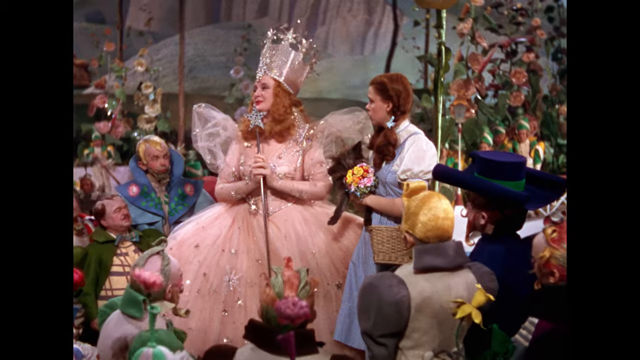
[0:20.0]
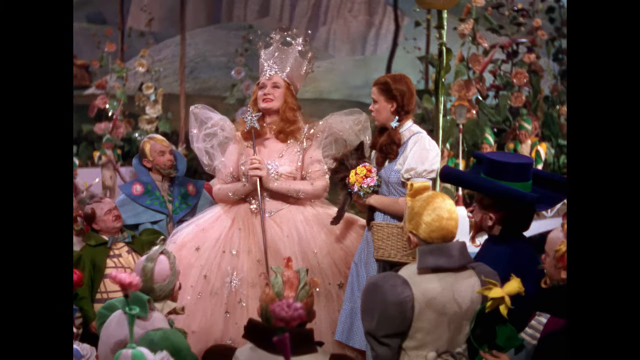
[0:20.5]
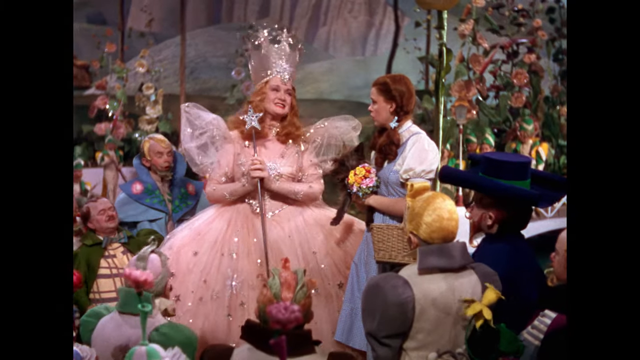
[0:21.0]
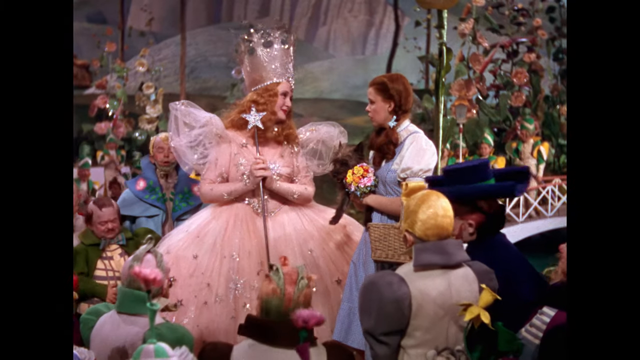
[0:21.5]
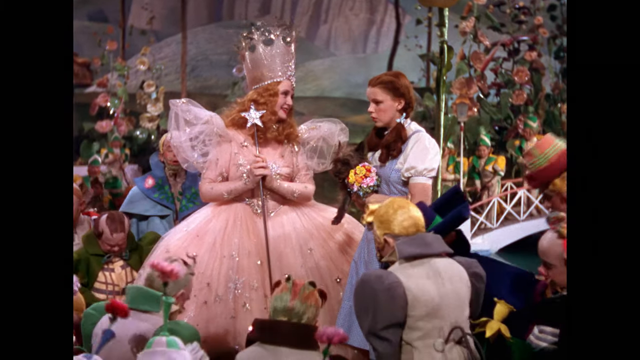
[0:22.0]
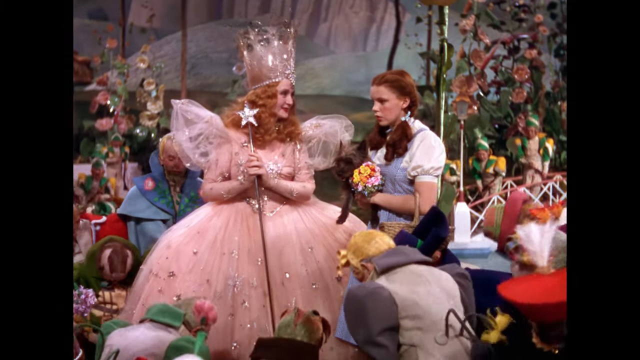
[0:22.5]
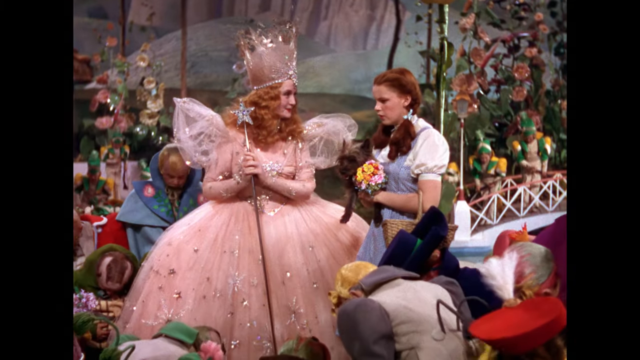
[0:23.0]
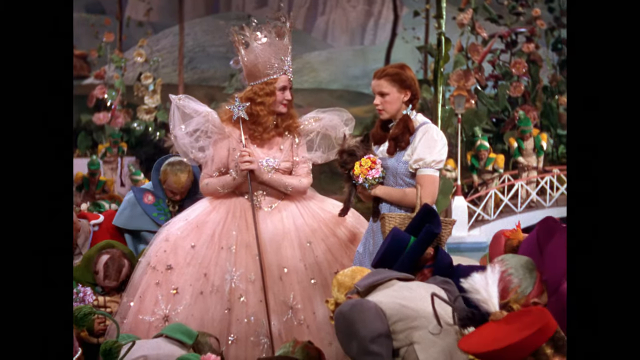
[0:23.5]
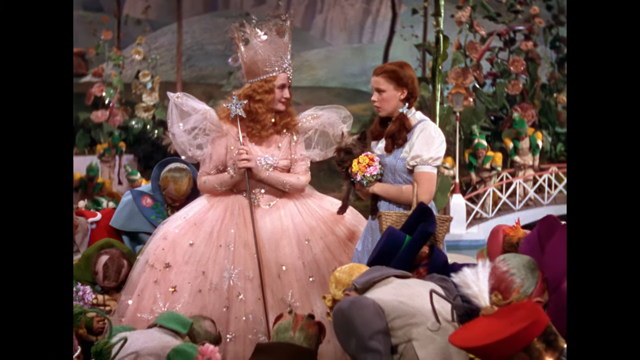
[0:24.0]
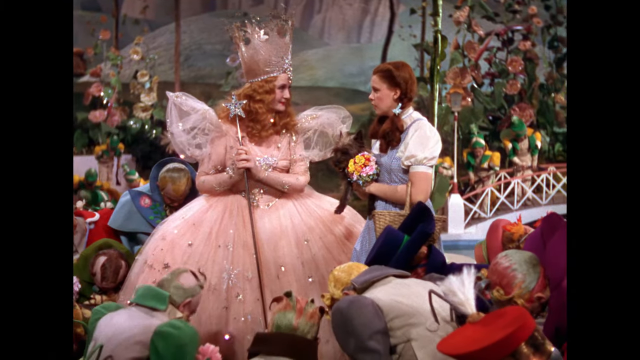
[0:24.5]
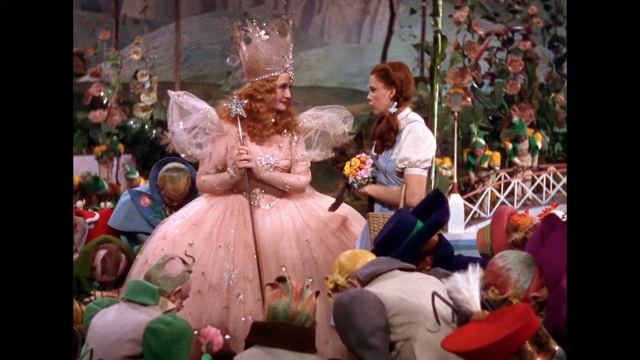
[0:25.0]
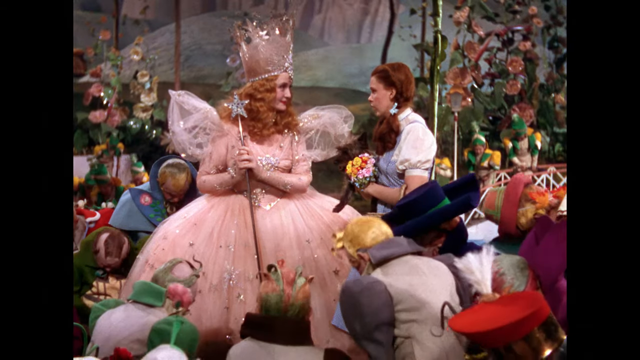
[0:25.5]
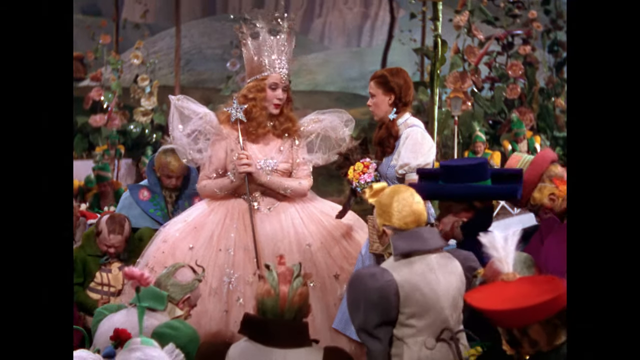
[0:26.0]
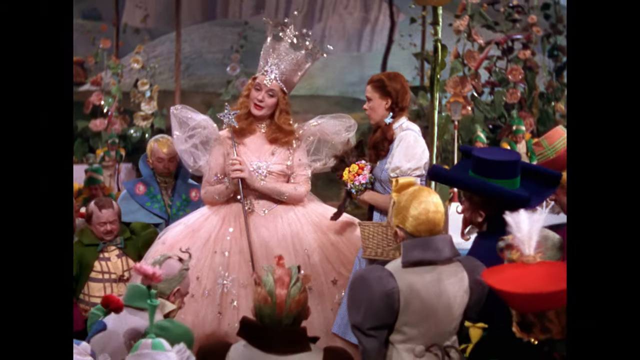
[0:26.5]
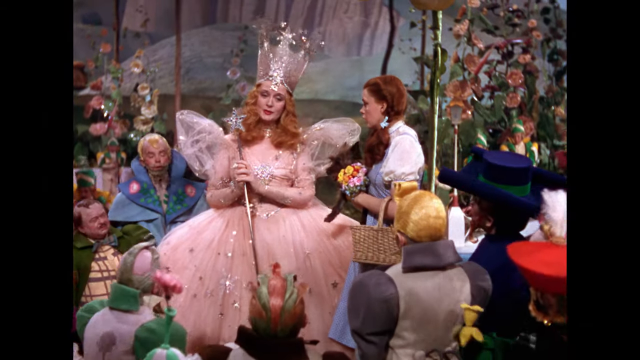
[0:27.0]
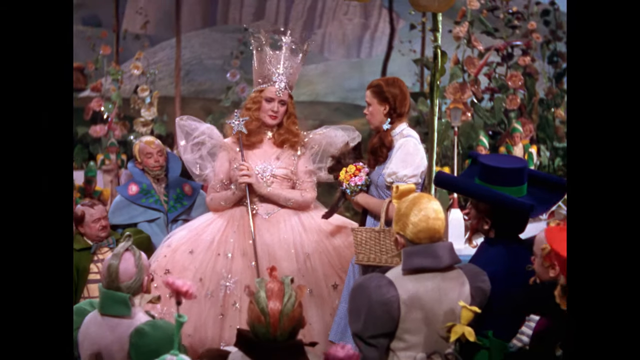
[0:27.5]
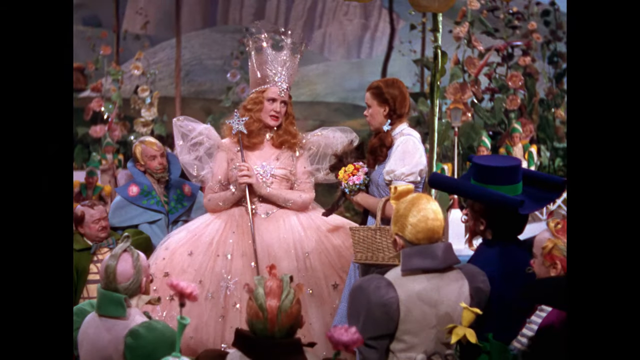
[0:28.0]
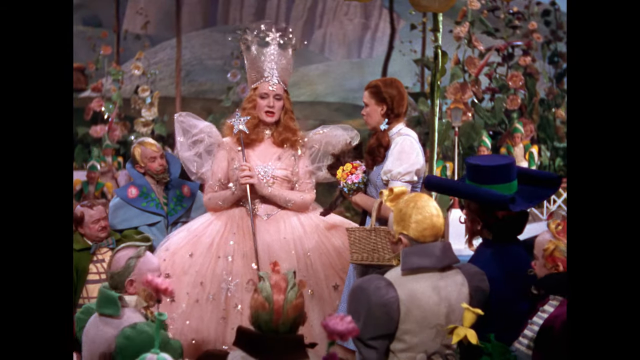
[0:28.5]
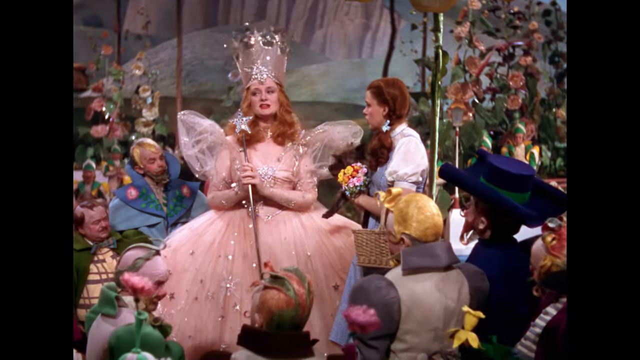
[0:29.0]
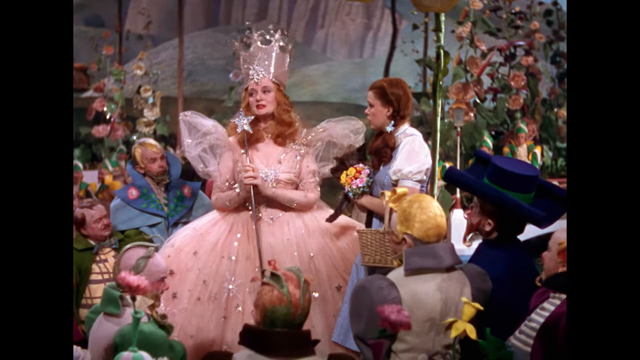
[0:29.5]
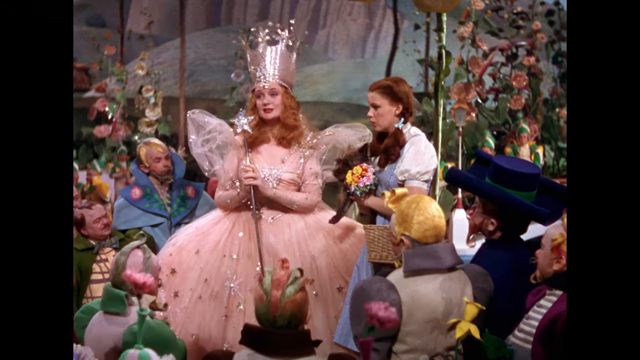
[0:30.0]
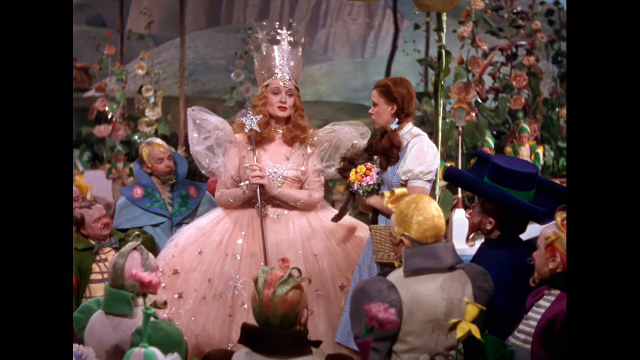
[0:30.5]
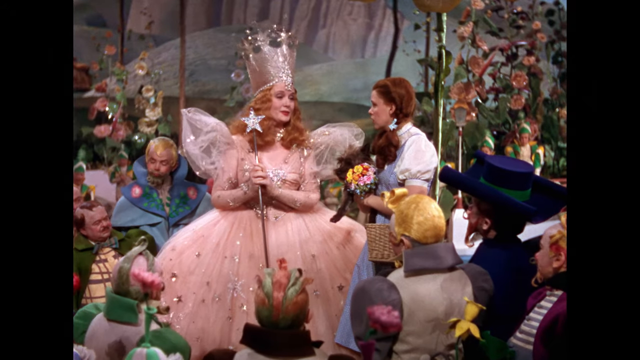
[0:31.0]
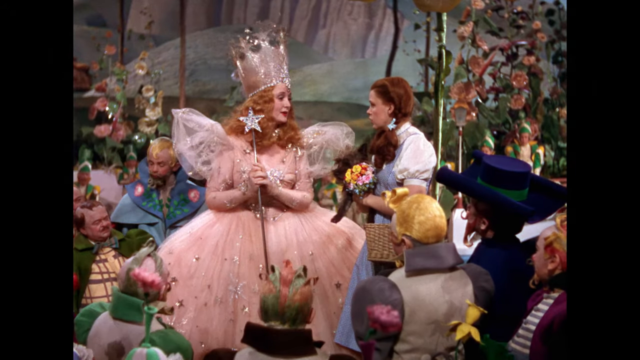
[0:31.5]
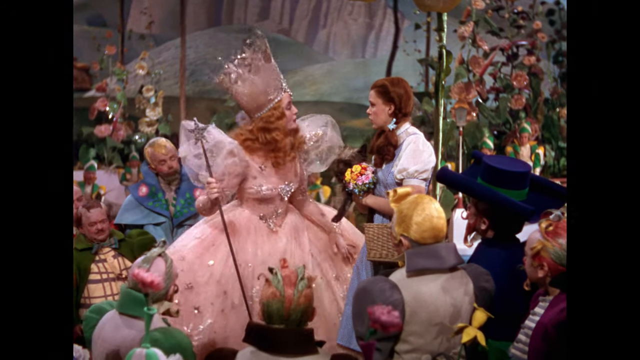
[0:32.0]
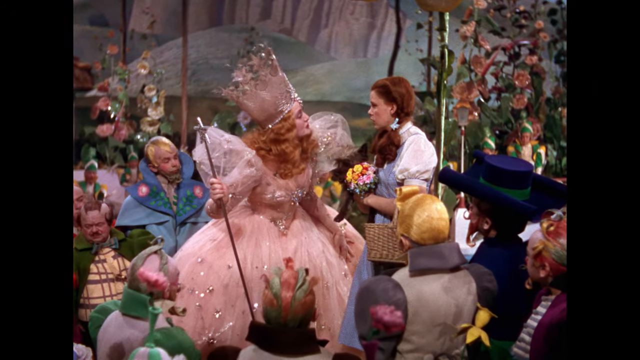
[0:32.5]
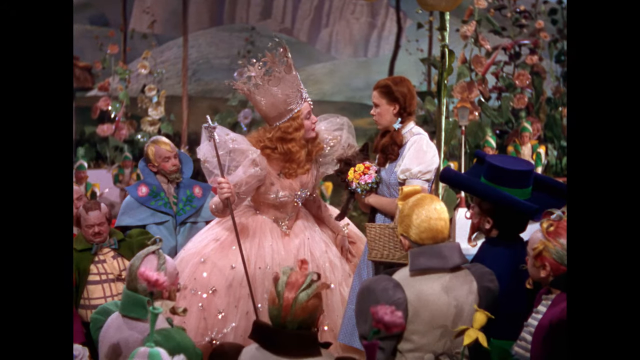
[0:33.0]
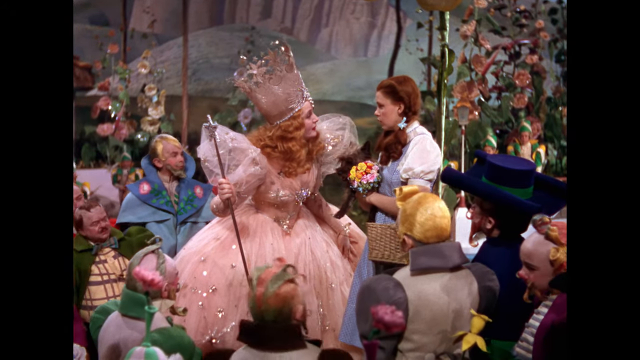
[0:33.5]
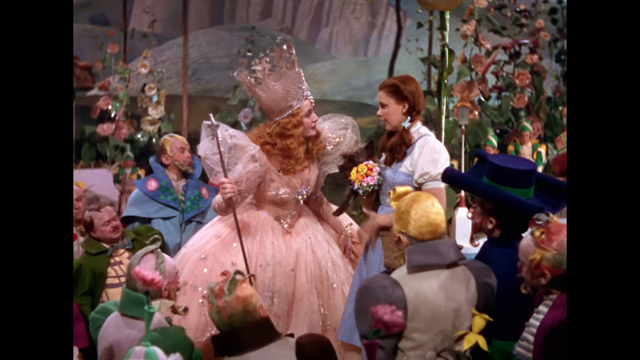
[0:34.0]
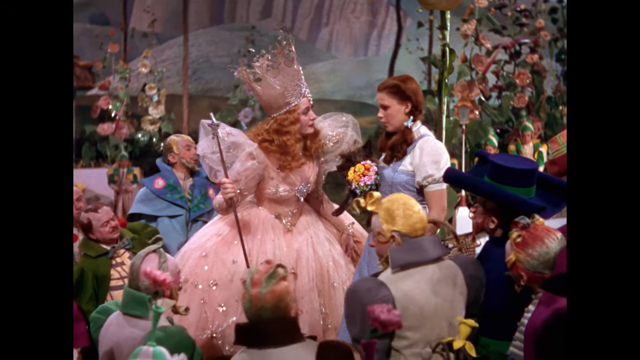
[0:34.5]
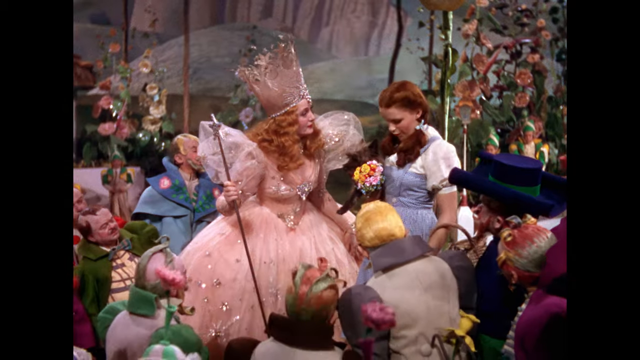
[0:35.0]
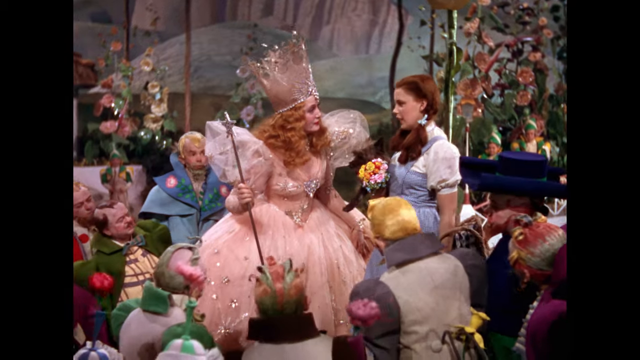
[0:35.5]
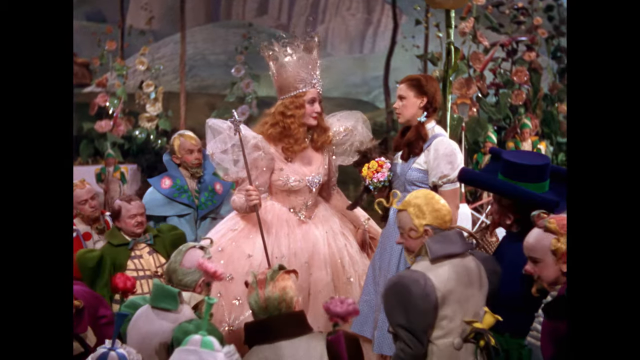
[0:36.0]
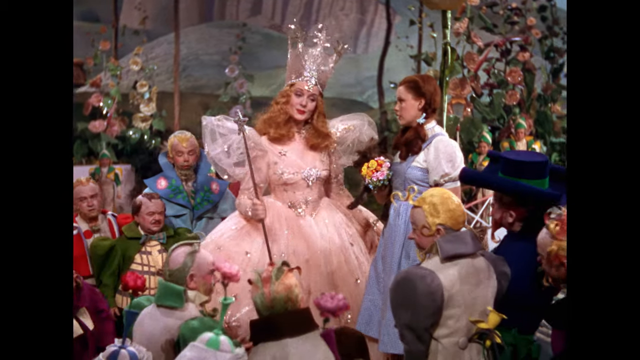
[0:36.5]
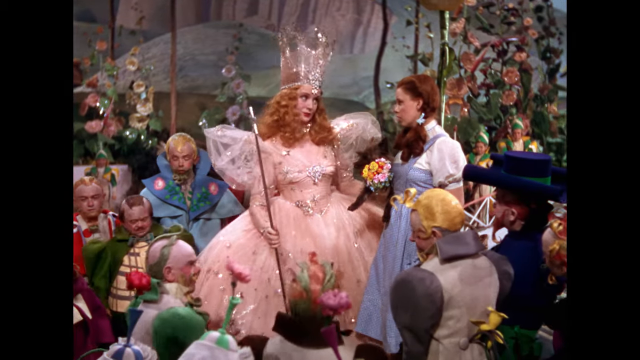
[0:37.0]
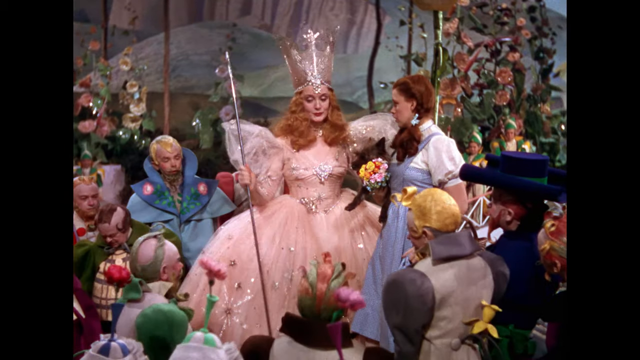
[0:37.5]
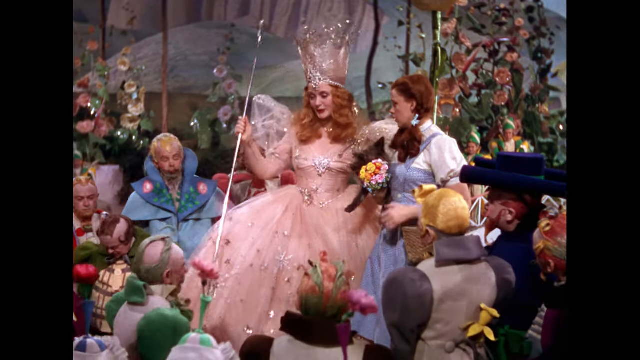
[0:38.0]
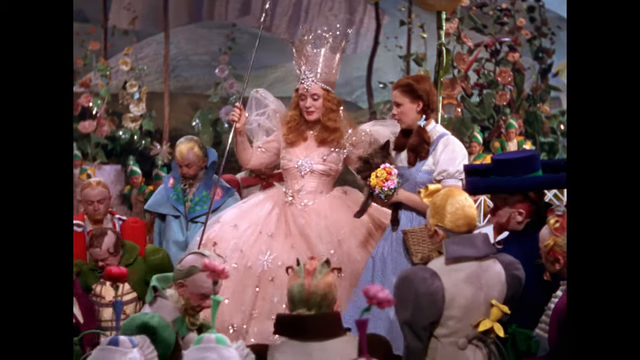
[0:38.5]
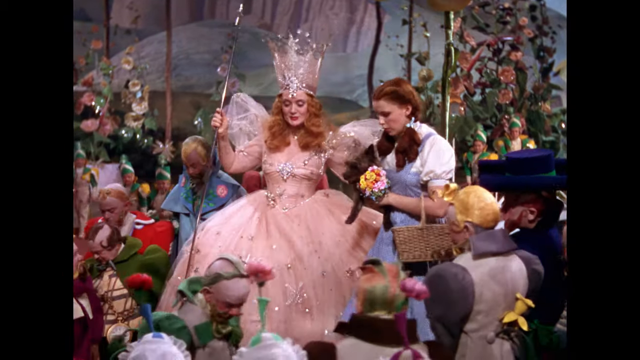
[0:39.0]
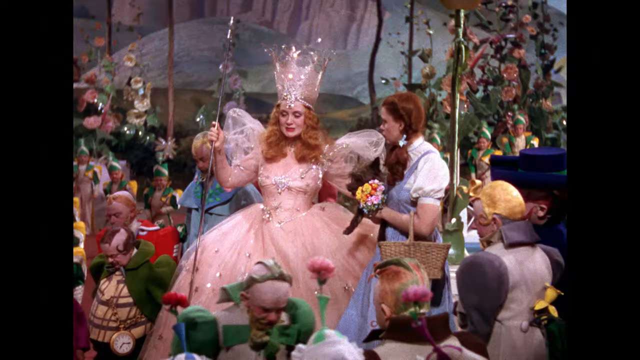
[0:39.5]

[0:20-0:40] In this scene from The Wizard of Oz with Judy Garland as Dorothy, the fairy godmother wears a light pink dress and a crown, and Dorothy wears her blue dress and holds her dog Toto, a bouquet of flowers and a picnic basket on her arms. They are surrounded by a group of munchkins in colorful outfits, such as large hats and capes, who stand around listening as the fairy godmother speaks. She holds a wand with a long, thin stick and a bright silver star on top in front of her chest as she speaks. She turns to look at Dorothy, and the munchkins all bow forward at the same time and then stand back up. Dorothy seems to respond to the fairy godmother, turning to her and speaking. The fairy godmother continues speaking, more or less facing the crowd and looking around. She then leans down and says something to Dorothy, who looks down and responds with a somewhat serious look on her face. The fairy godmother continues speaking and then leads Dorothy by the arm as they begin walking down the stairs.